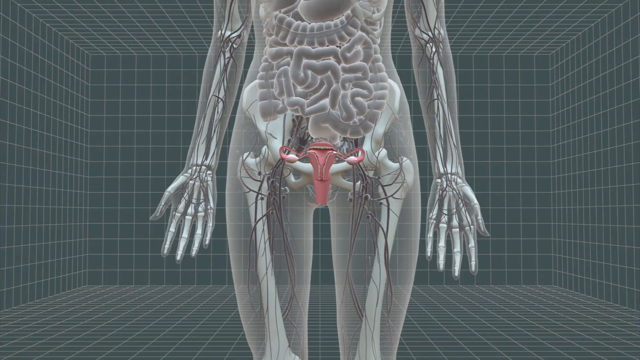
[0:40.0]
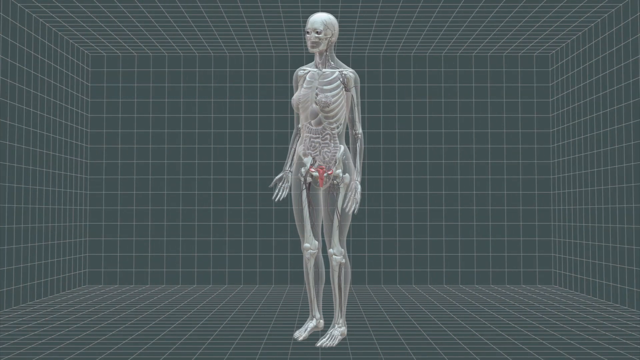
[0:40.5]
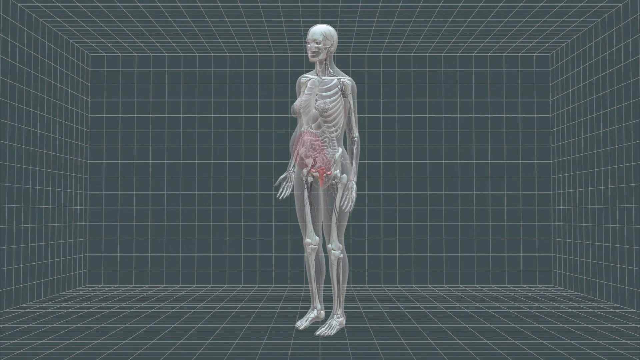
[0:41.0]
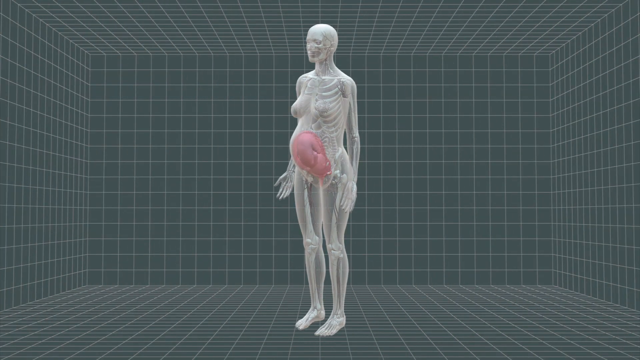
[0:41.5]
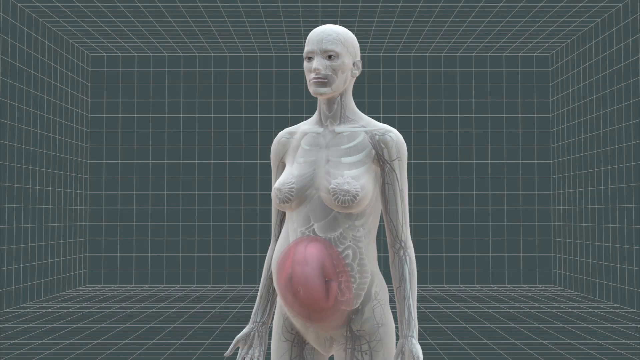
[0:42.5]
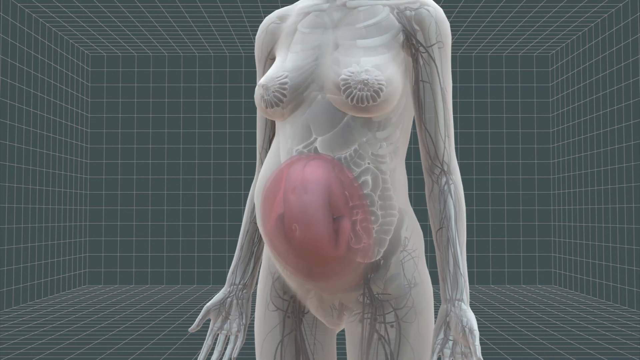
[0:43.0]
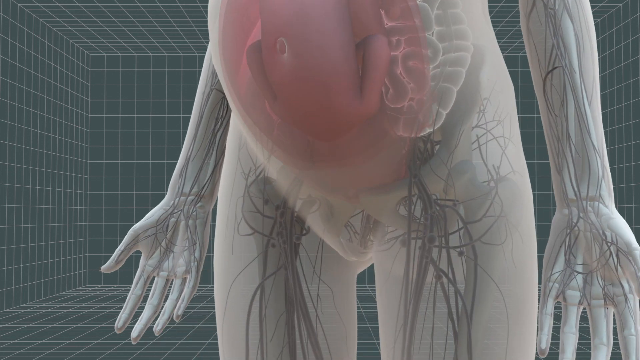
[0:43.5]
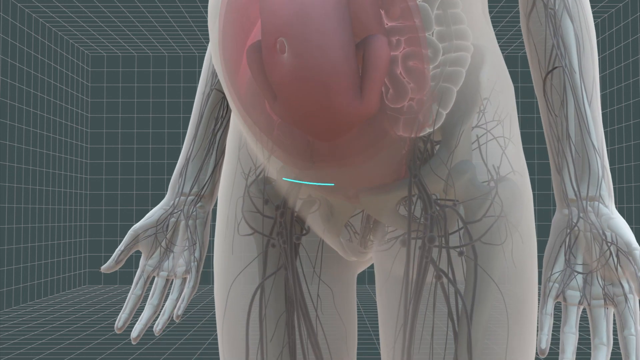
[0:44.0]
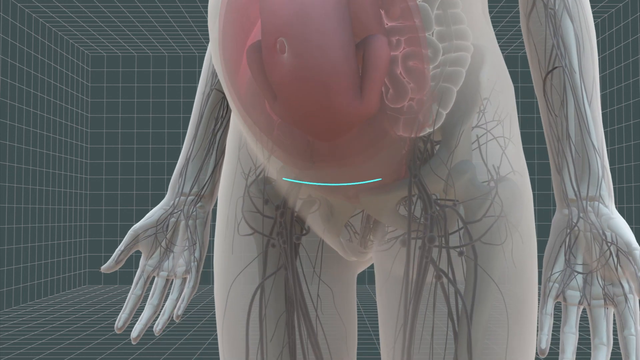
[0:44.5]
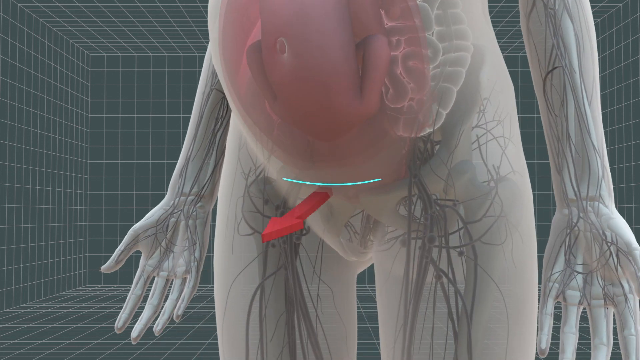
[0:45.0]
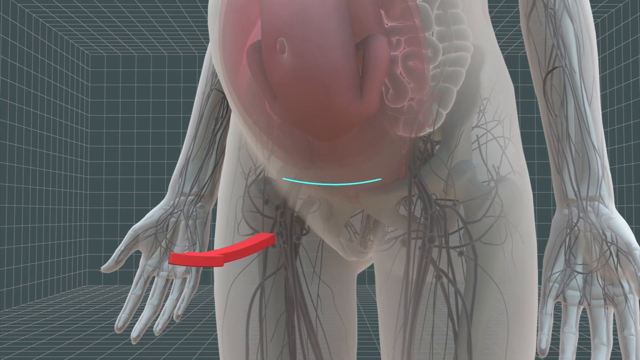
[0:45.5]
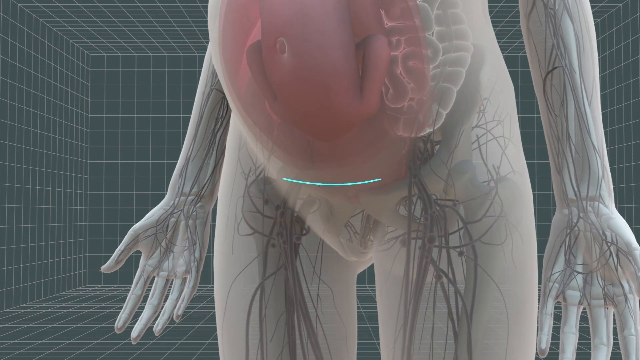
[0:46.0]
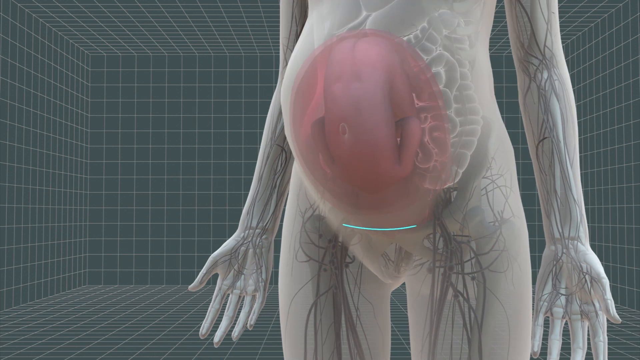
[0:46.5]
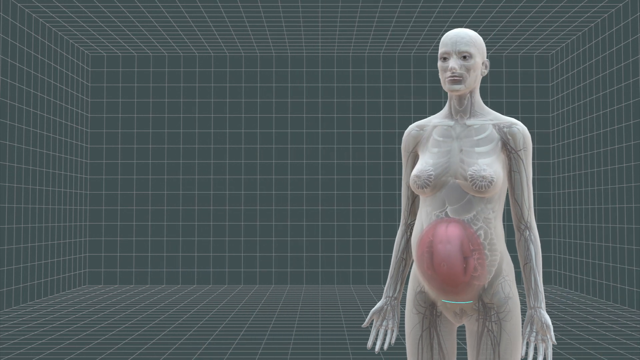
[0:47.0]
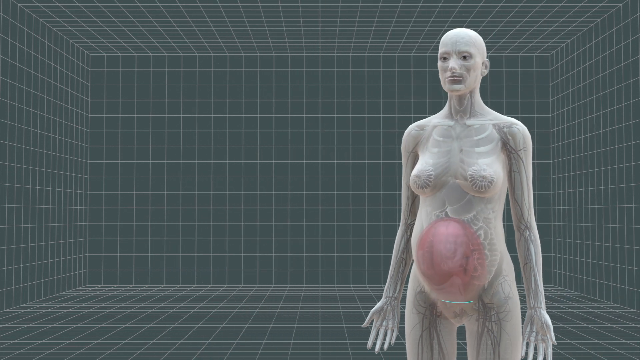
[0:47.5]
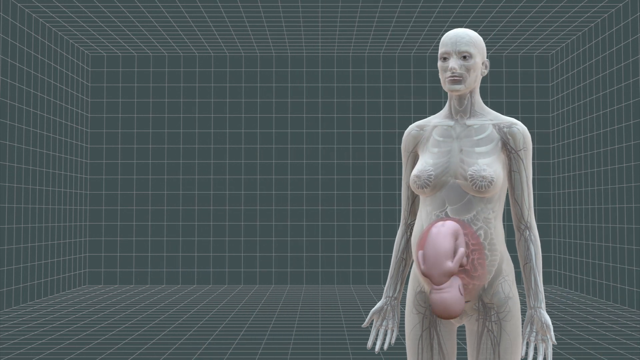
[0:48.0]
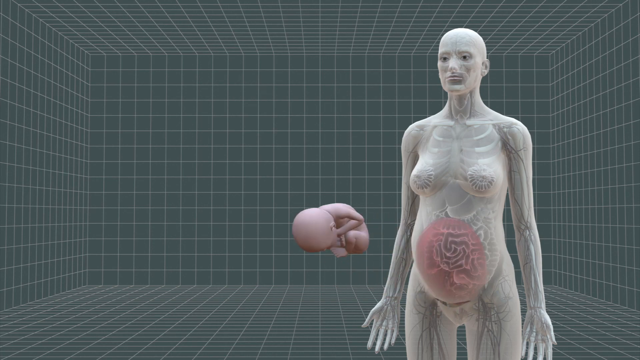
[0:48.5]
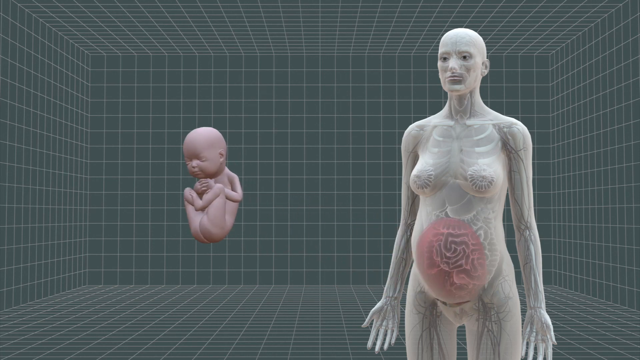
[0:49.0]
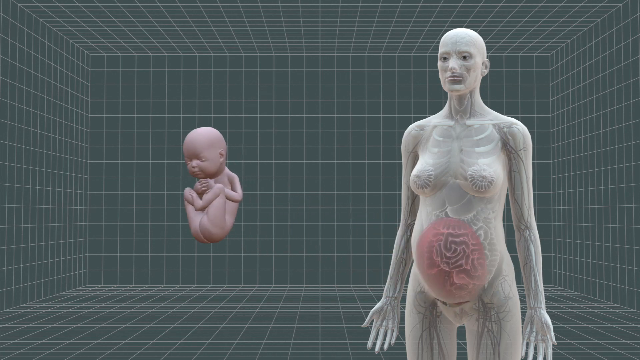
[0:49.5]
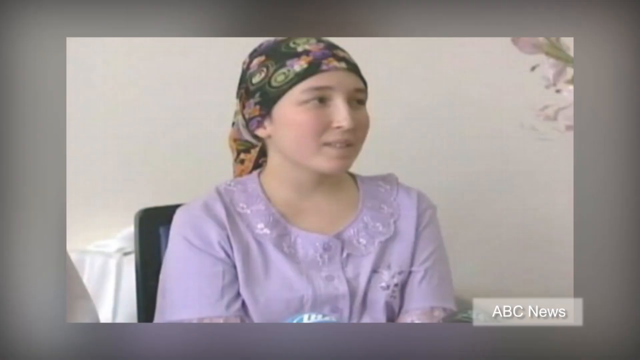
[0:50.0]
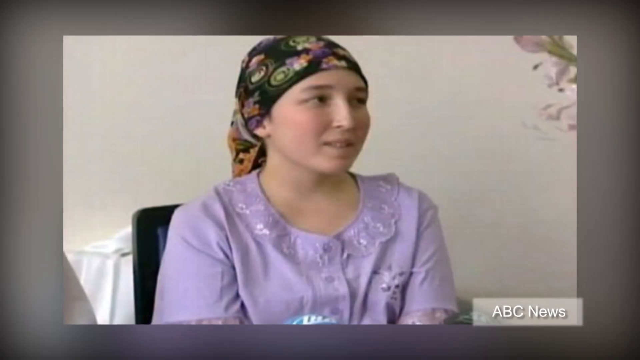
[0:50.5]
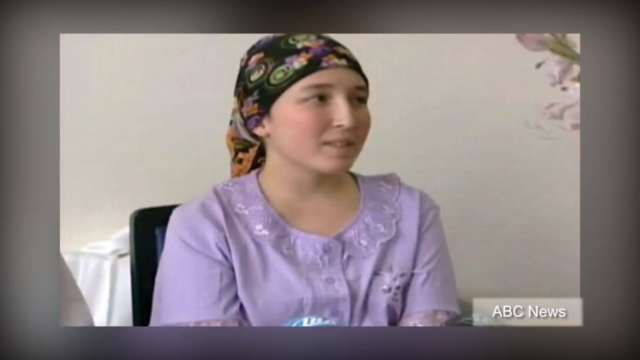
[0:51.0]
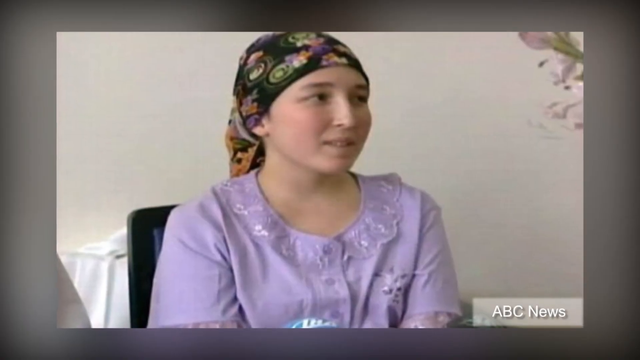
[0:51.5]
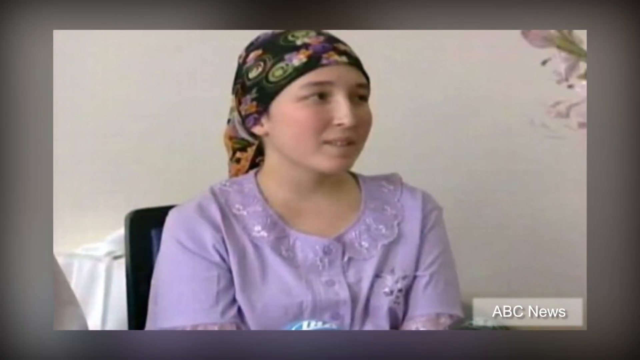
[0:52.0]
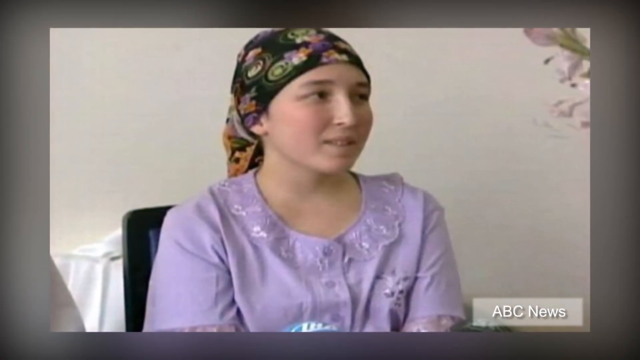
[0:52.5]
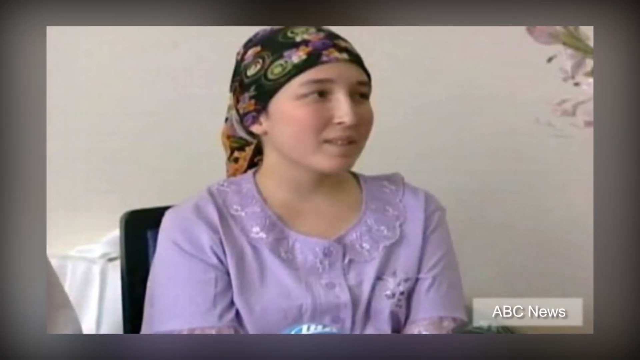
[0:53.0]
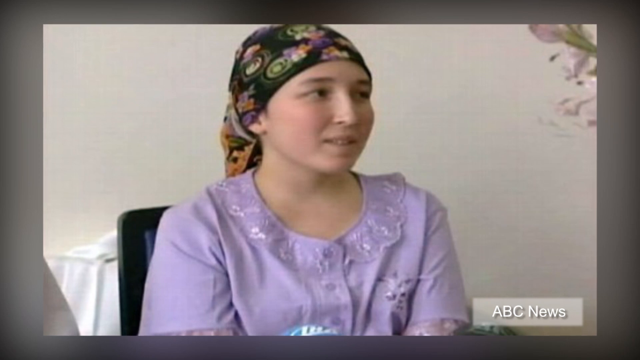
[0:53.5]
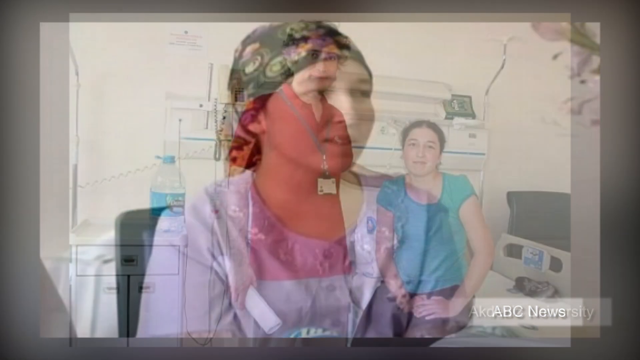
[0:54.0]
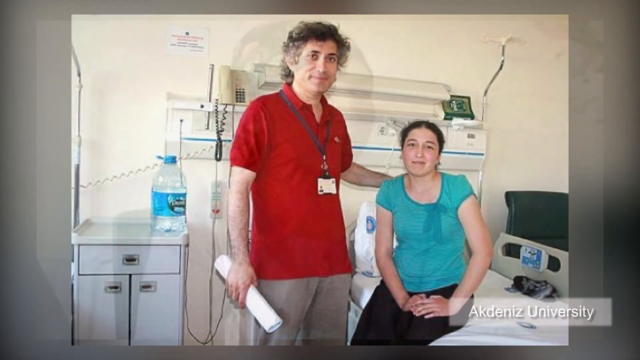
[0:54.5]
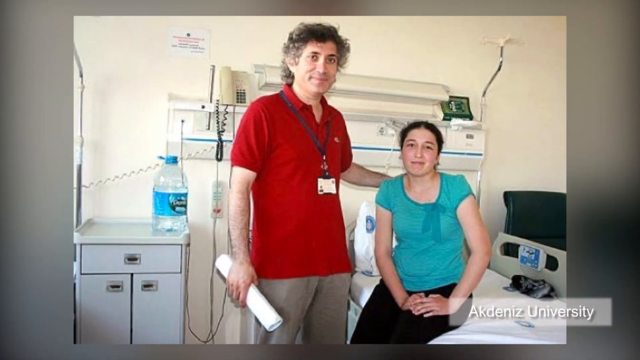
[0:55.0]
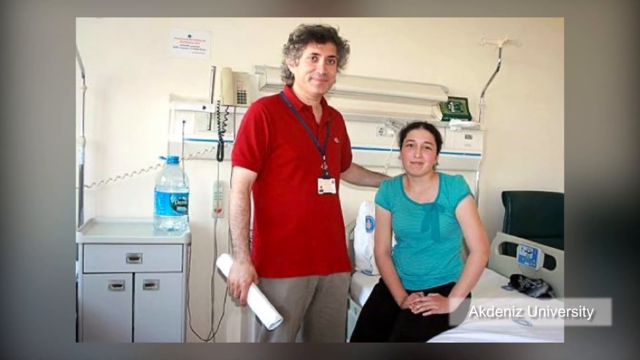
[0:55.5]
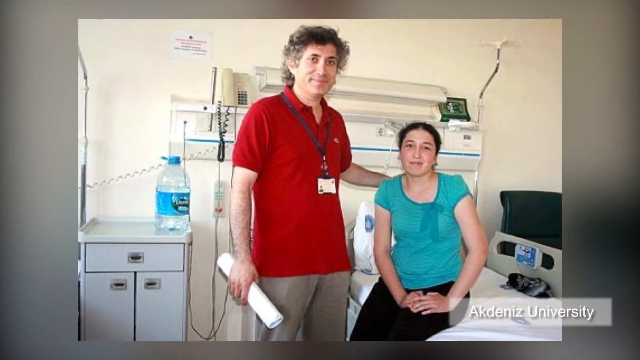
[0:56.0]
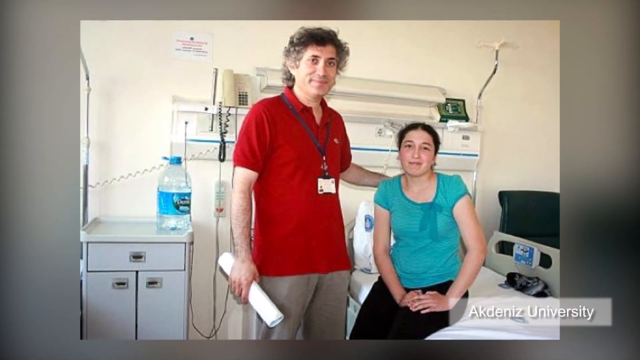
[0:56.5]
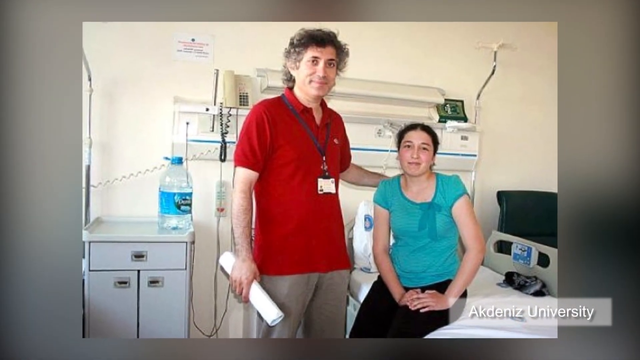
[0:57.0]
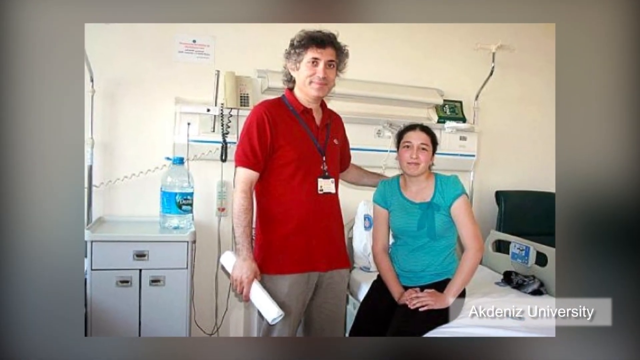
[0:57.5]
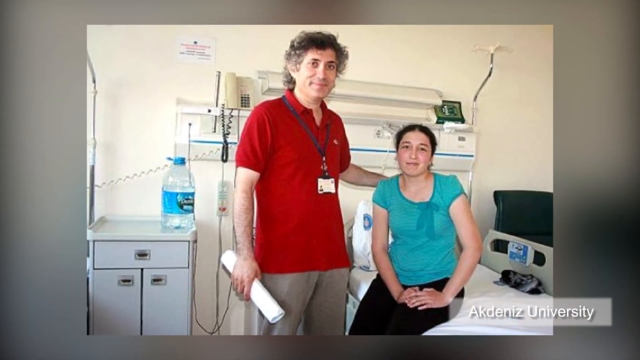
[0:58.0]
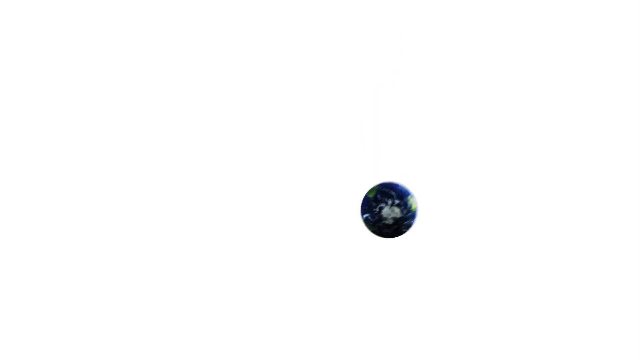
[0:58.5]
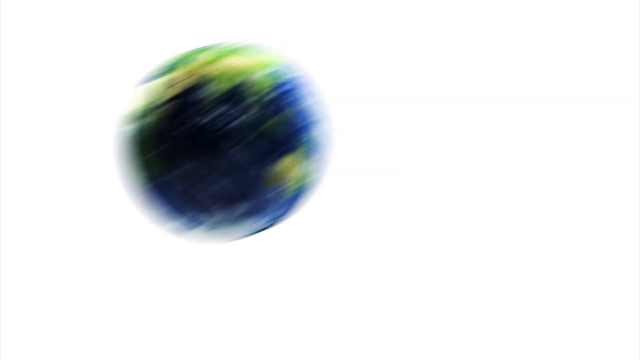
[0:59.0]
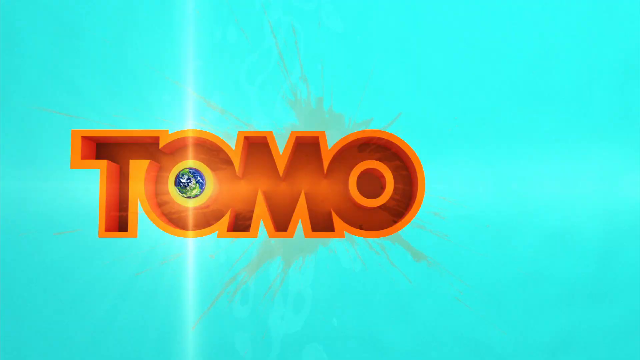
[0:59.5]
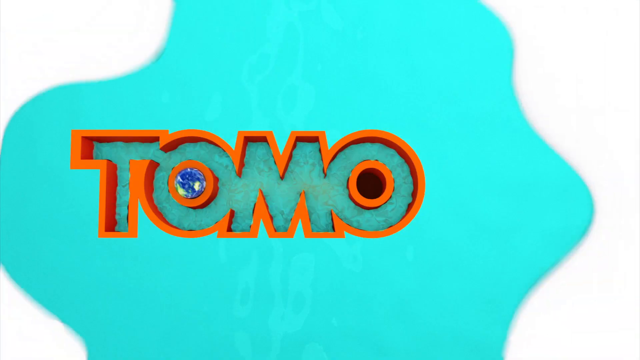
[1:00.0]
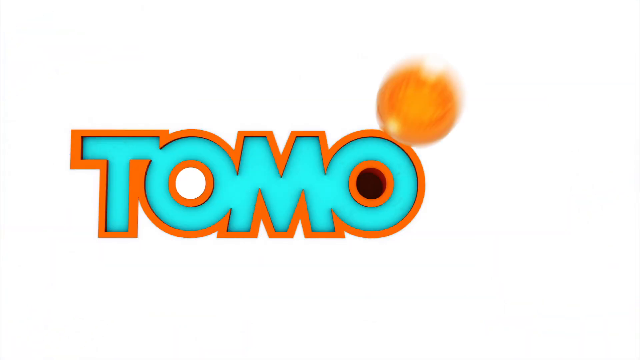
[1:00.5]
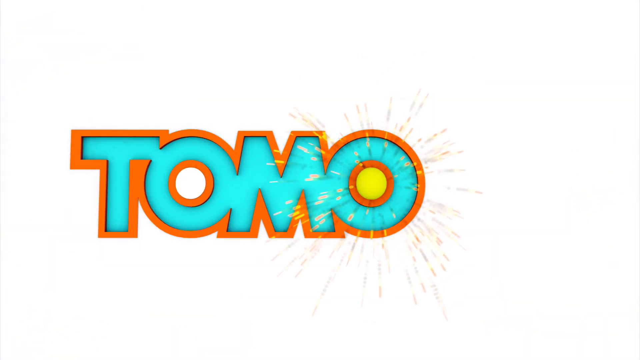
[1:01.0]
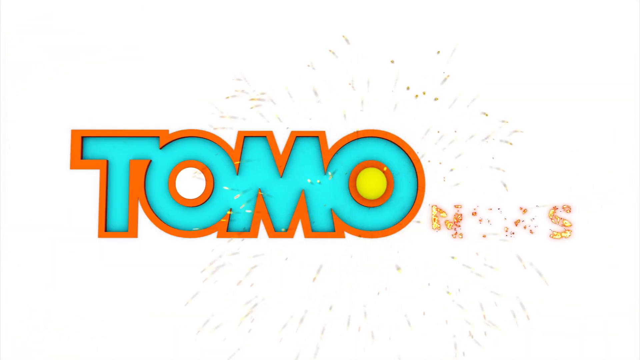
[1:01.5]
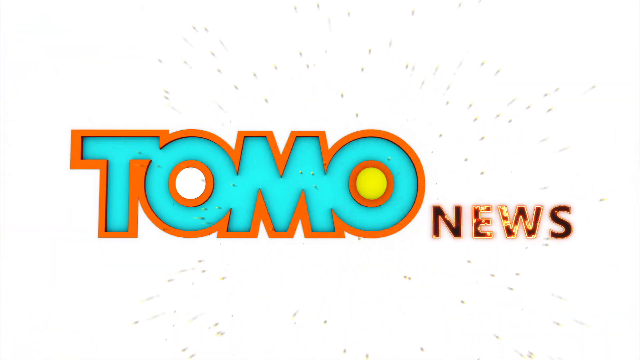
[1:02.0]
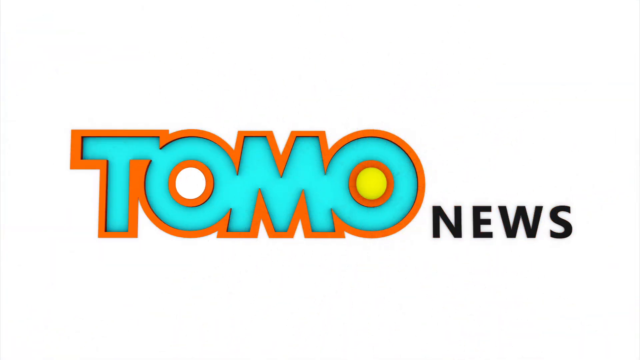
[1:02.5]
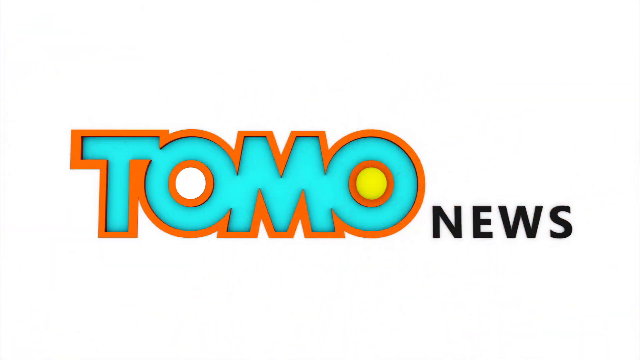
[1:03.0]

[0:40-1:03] A sort of female figure is shown, a gray, silver-colored plastic-type body revealing organs, bones and so on. Suddenly the pink area expands: the belly of the robot figure expands, with the pink growing at the middle. A close-up low on the figure's belly follows, where a teal line is drawn across the lower abdomen in a smile-like design. A darkened red arrow then comes outward from the teal mark, away from the body. Next, an image shows only the kind of automaton female robot figure on the right, with a sort of baby in its belly that is upside down and facing backward. The baby then sort of catapults out, away from the body. Finally, a woman is shown wearing a light purple kind of blouse with lace along the neckline and a head covering, a kind of scarf in black, green and purple with other accents and something flower-like on top.